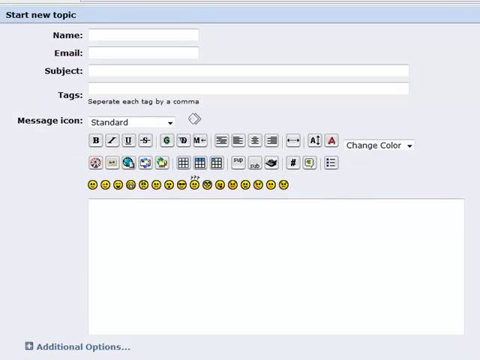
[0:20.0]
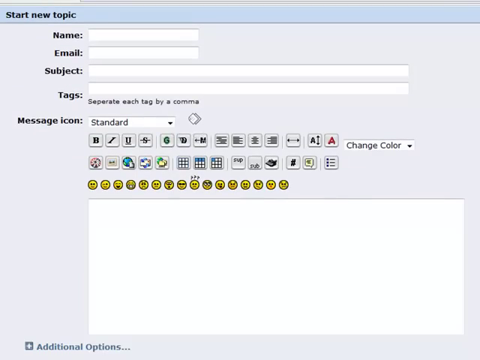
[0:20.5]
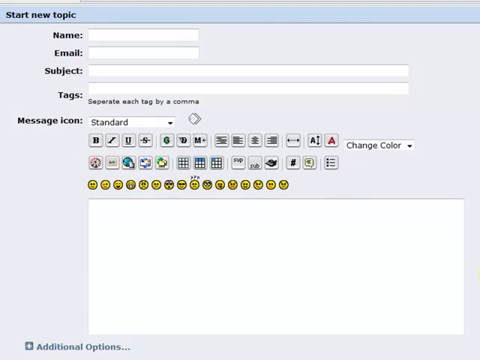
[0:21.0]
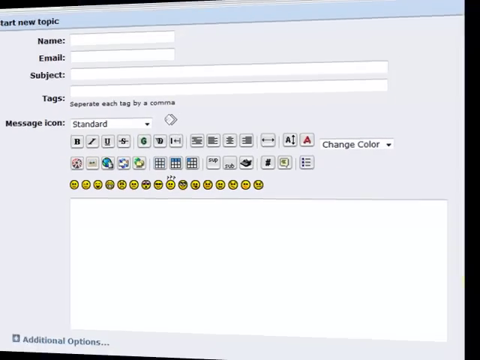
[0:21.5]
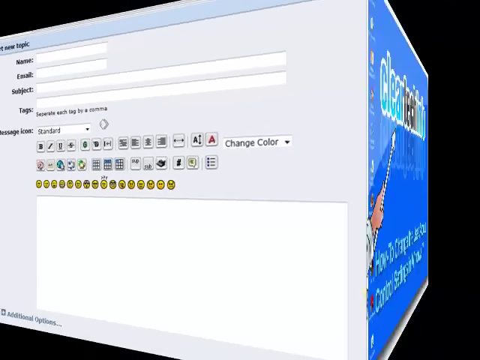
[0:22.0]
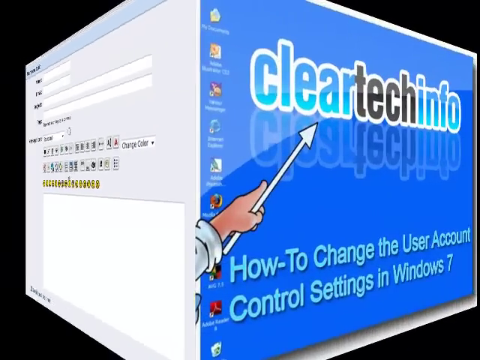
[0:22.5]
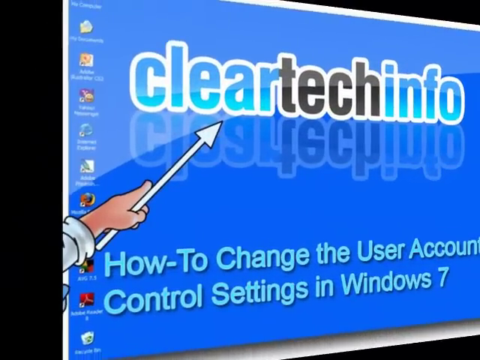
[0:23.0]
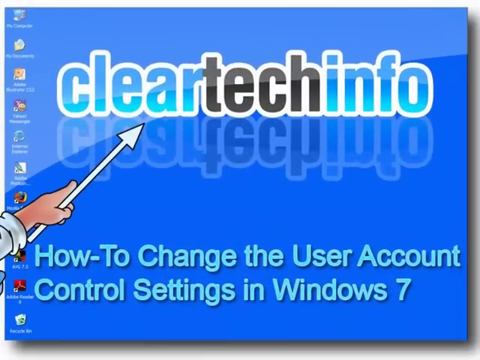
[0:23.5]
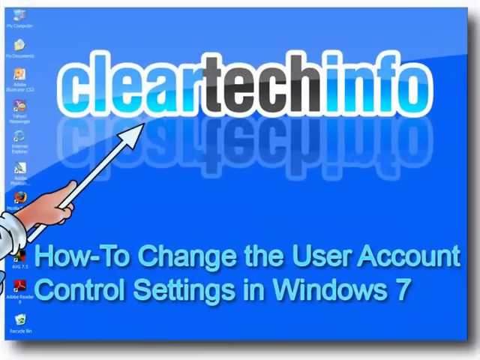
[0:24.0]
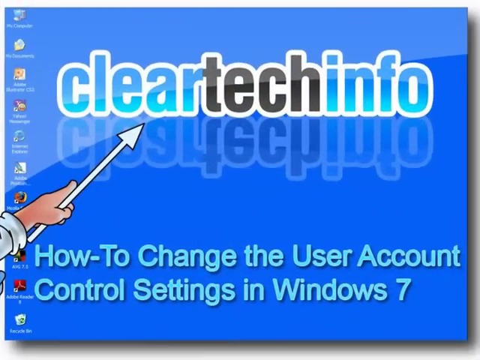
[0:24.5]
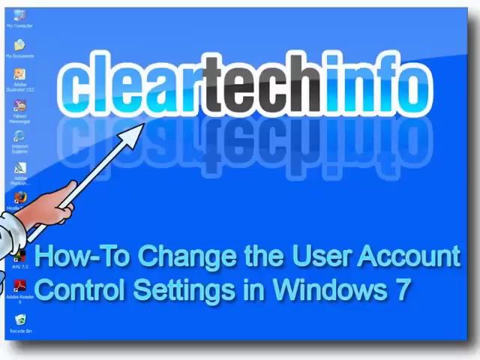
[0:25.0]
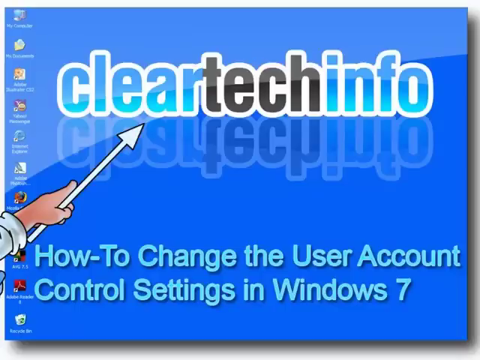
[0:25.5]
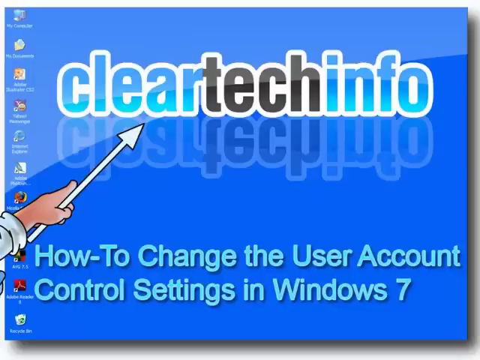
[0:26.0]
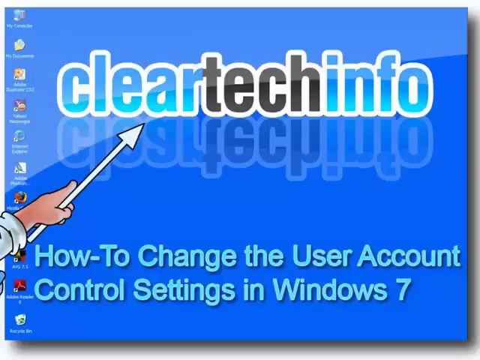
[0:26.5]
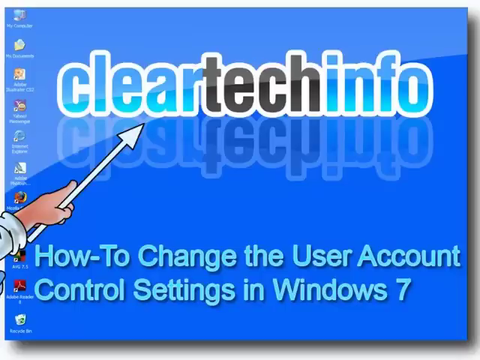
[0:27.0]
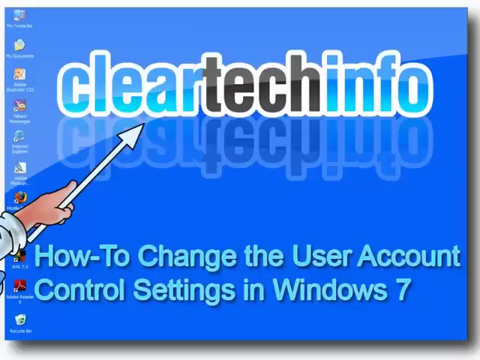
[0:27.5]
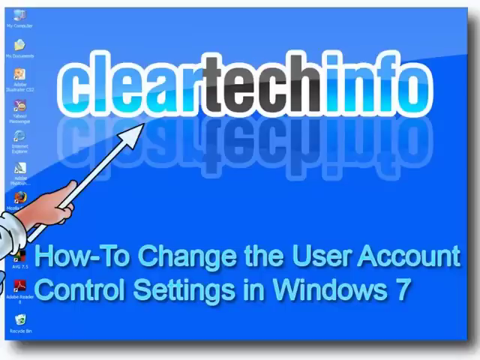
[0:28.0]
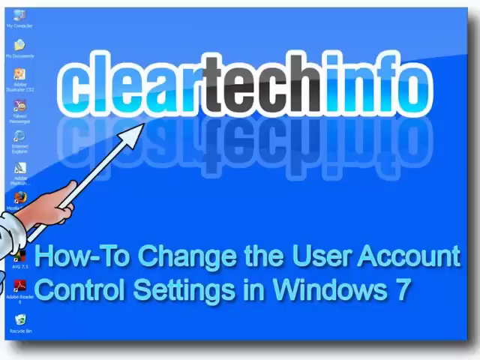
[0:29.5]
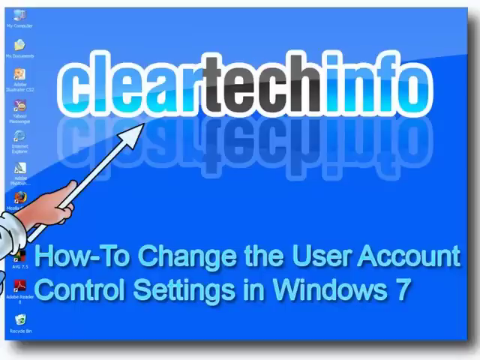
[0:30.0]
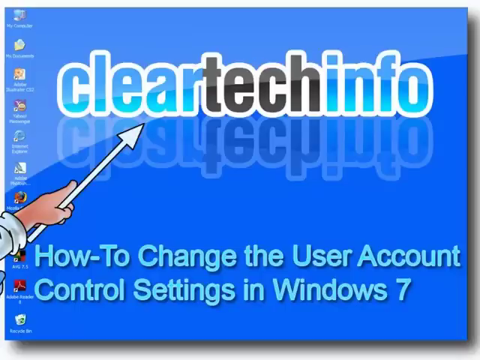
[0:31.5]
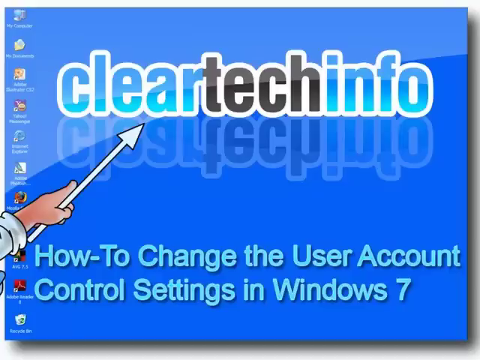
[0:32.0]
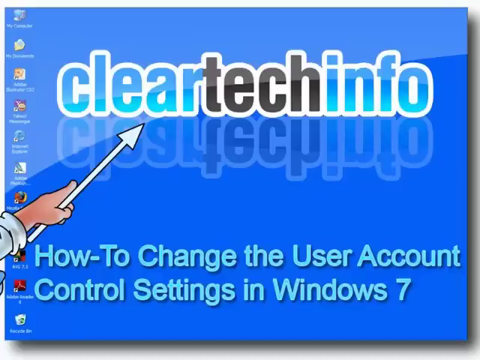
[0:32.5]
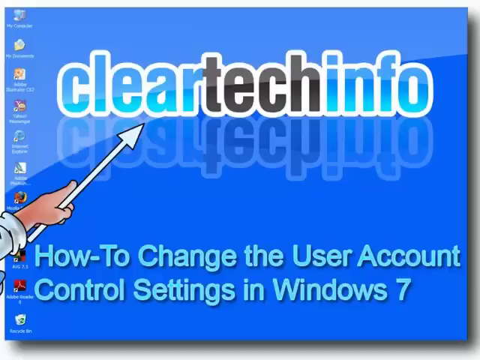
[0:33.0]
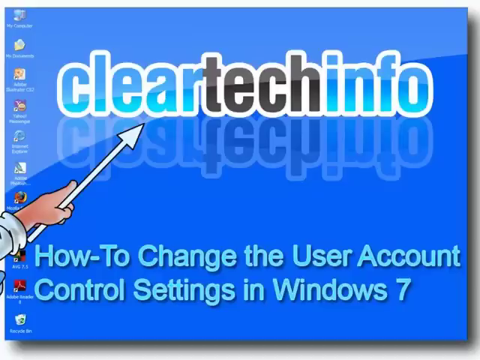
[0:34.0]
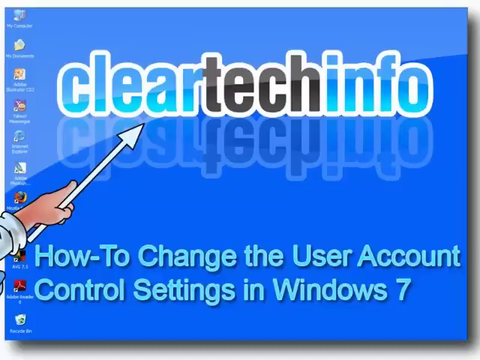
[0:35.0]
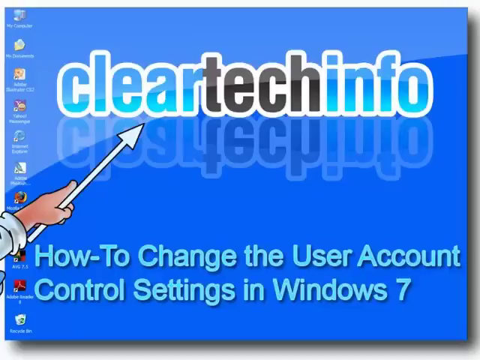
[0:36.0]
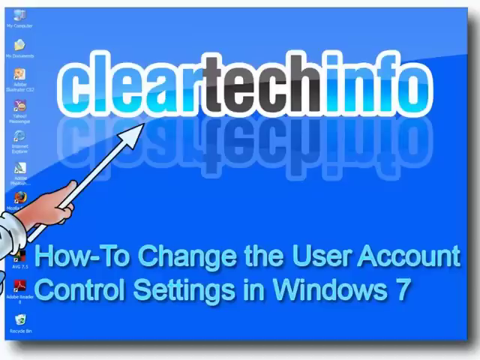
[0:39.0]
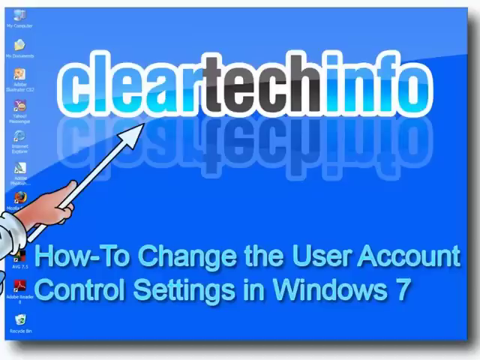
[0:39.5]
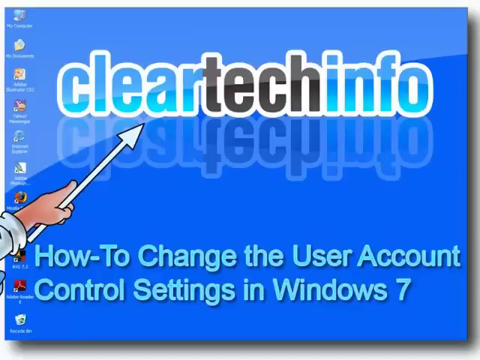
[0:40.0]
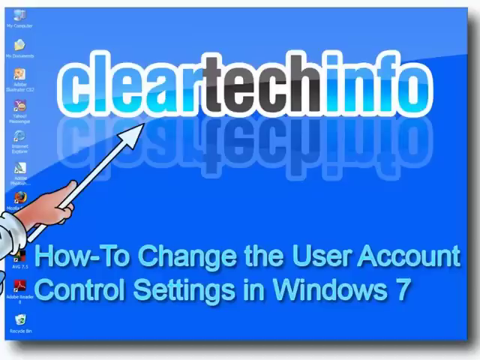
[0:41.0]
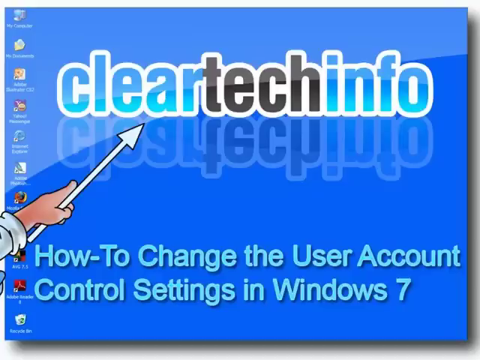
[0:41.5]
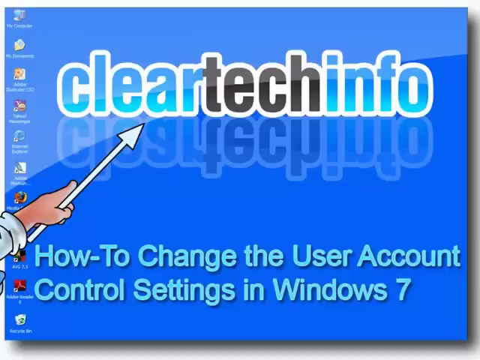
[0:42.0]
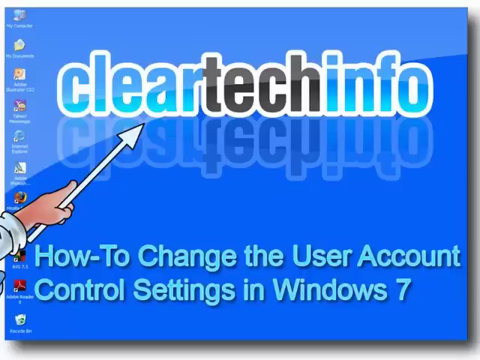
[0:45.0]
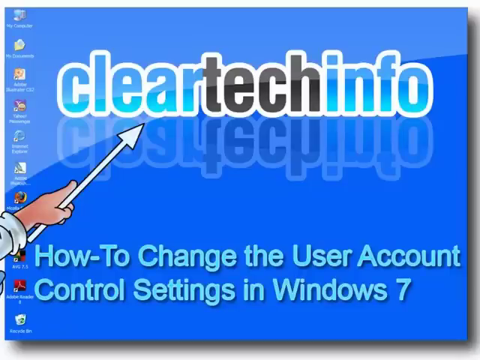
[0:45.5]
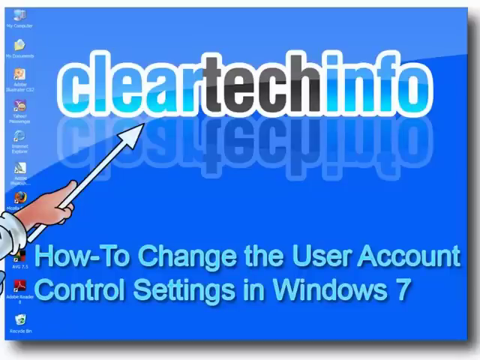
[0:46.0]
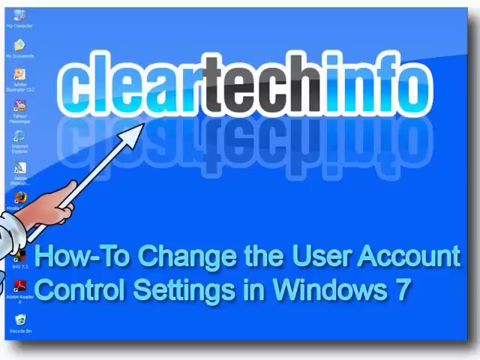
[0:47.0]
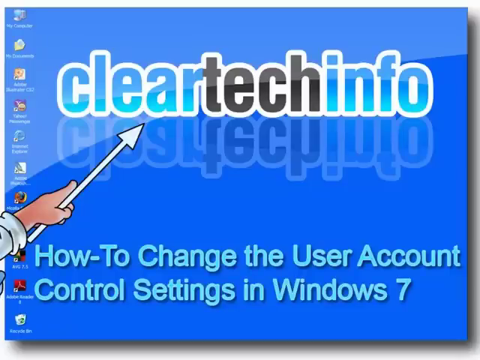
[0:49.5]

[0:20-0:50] The create a new topic page shows fields for name, email, subject and taglines, plus a message icon drop-down currently set to "standard". There are bold, italic and underline options, an option to strike something out, and small, low-end smiley face icons that can be selected. A transition then slides the view from right to left onto a Clear Tech Info page with a blue background like the Windows main screen. A hand in a white shirt comes in from the left-hand side holding an arrow pointed at the Clear Tech Info logo, which is blue, then black, then blue again. On a whitish blue color it says "how to change user account control settings in windows 7". The shot holds on this main window screen, with icons in one row down the left-hand side.